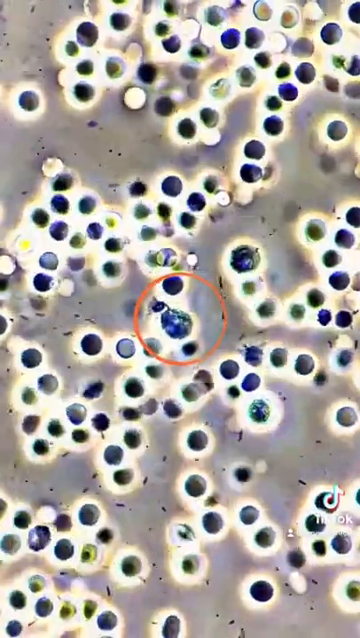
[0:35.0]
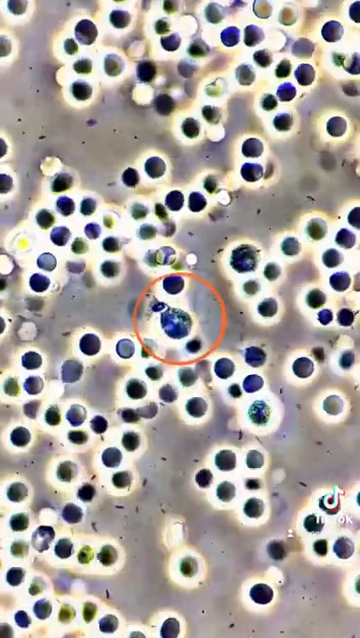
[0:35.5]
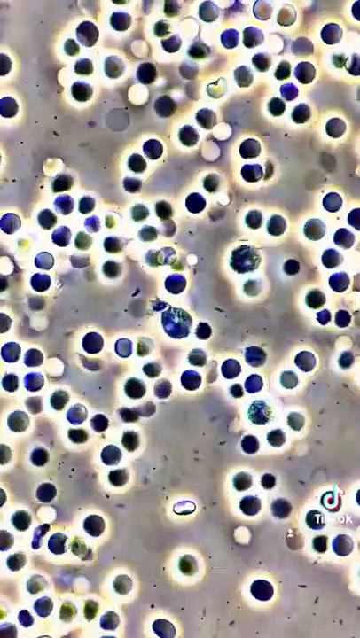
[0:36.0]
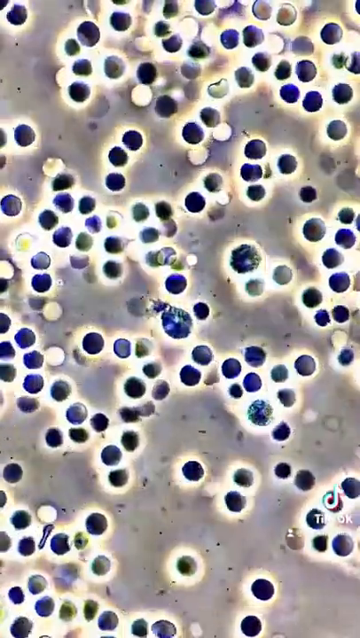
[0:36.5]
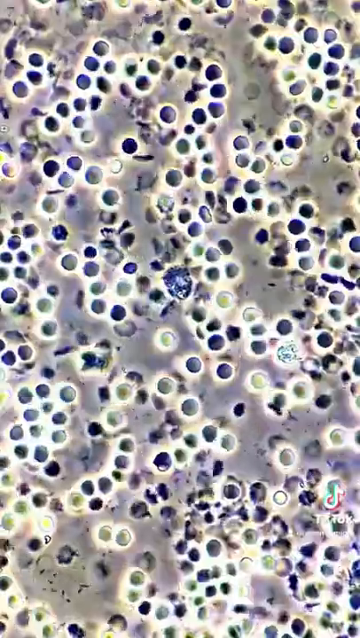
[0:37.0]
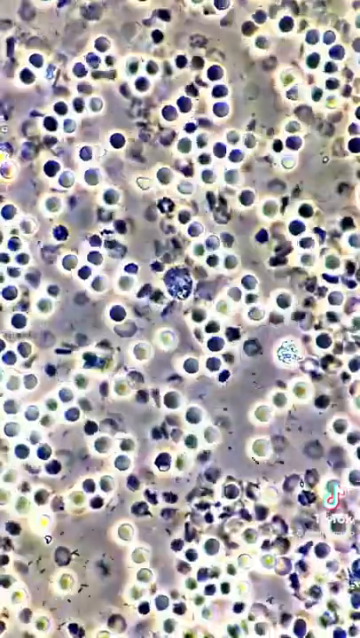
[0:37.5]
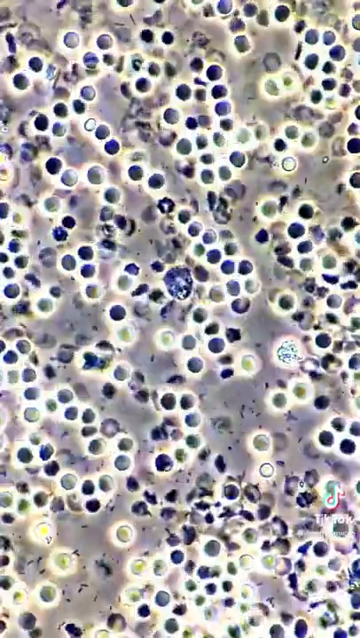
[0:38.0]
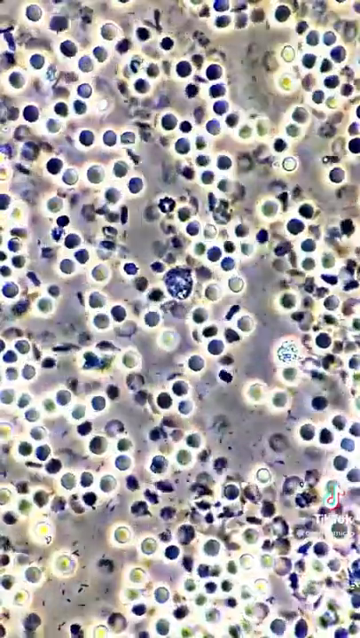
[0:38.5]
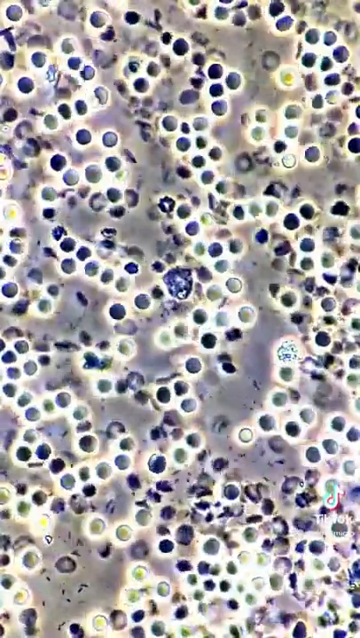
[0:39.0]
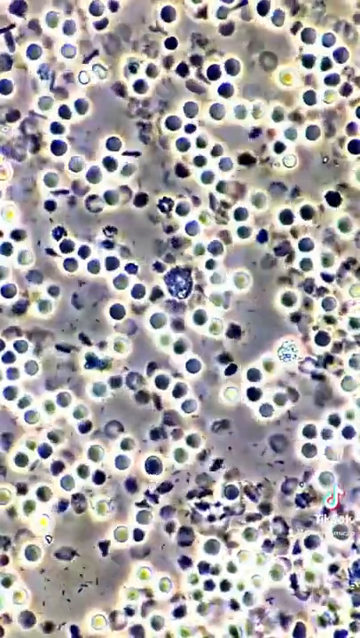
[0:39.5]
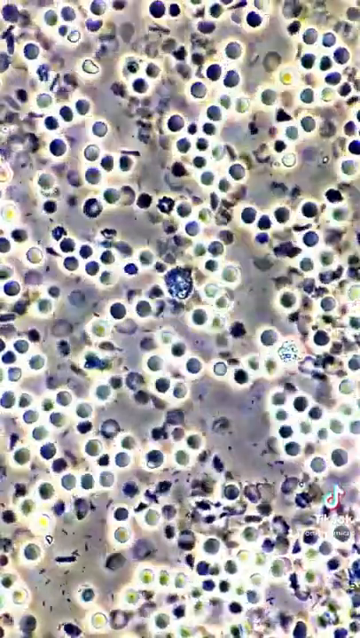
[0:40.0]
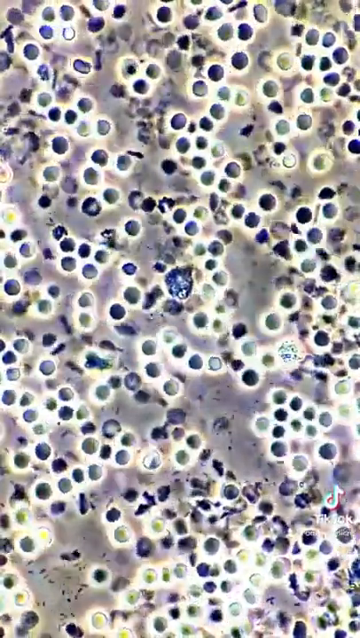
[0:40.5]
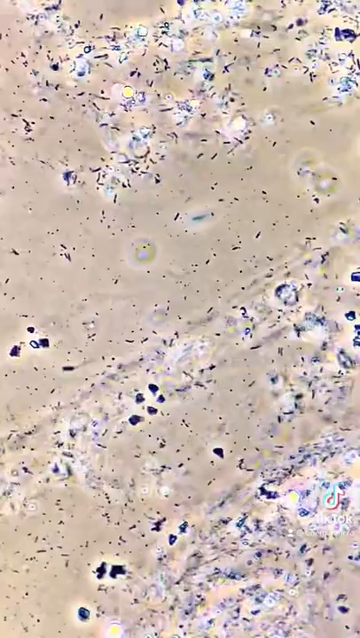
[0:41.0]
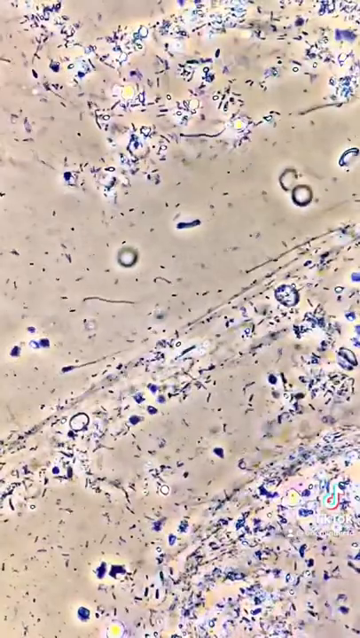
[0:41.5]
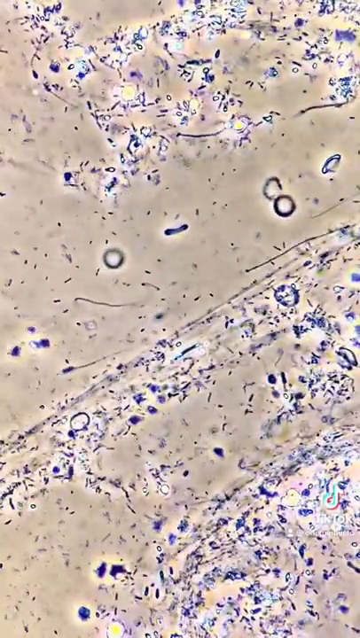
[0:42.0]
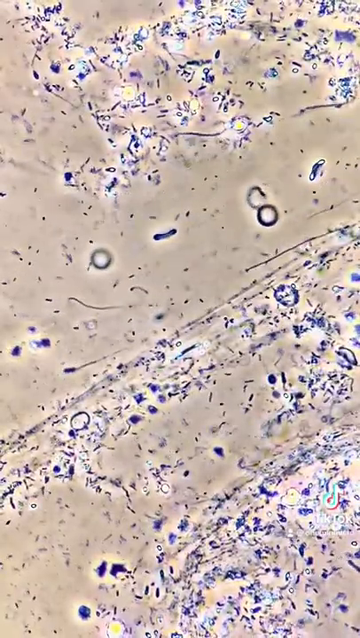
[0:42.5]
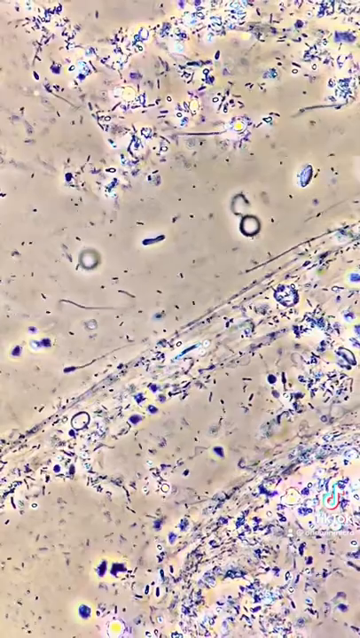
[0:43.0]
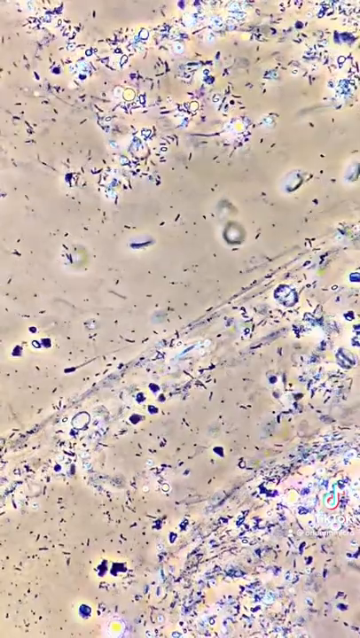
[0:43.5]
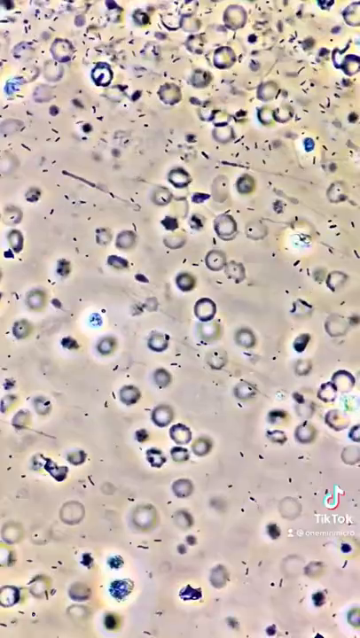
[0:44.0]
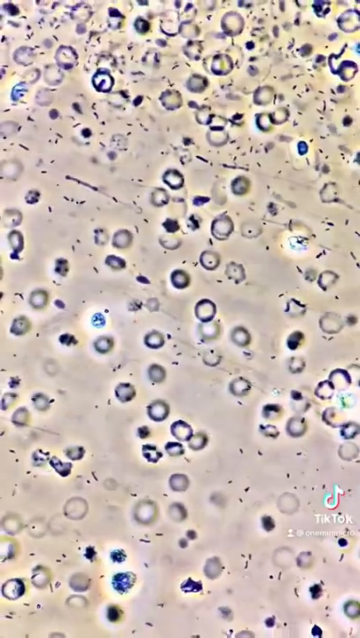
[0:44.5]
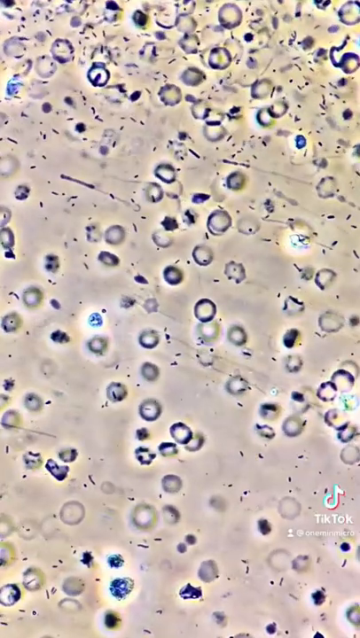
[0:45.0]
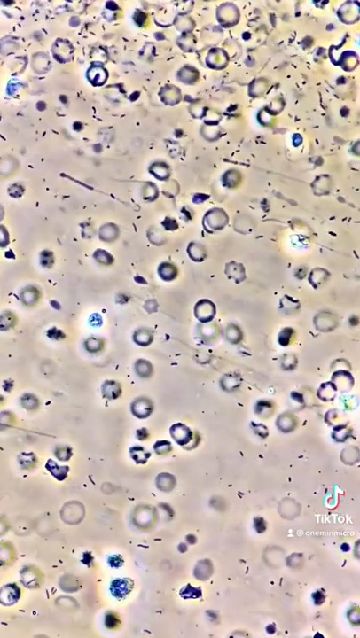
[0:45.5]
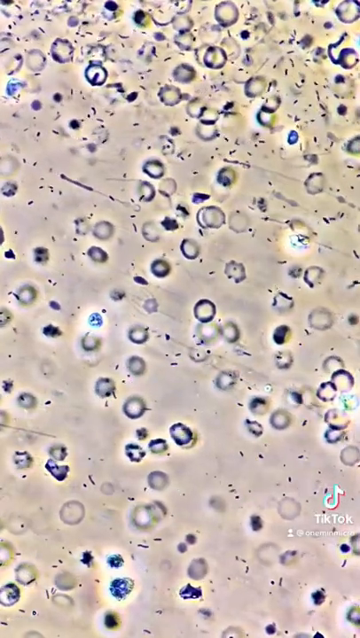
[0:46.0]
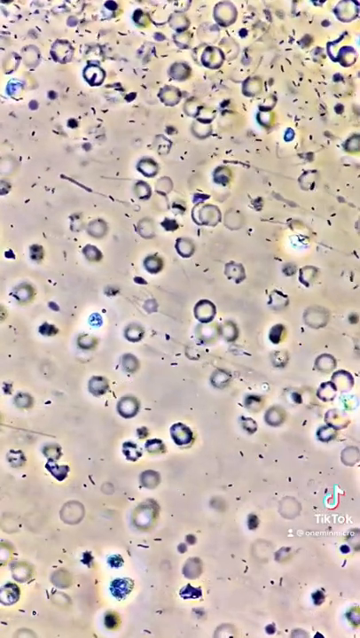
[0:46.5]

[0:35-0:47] Cells under the microscope appear to be maybe a blue color, and the video cuts to other cells that look kind of gray. They all seem to be swimming in some kind of liquid; some move fast, some slow, and some not at all. Some images show clusters of many cells, while others show only a few cells traveling very slowly, looking almost like a traffic jam of cells. Some cells are kind of brown and pink, others gray and black, and some dark blue. Some swim from the bottom of the frame to the top, some from left to right, and others from right to left. Most appear to move kind of slowly, and only some of the images appear to have faster-moving cells. The cells, possibly blood cells or something else, look very round.